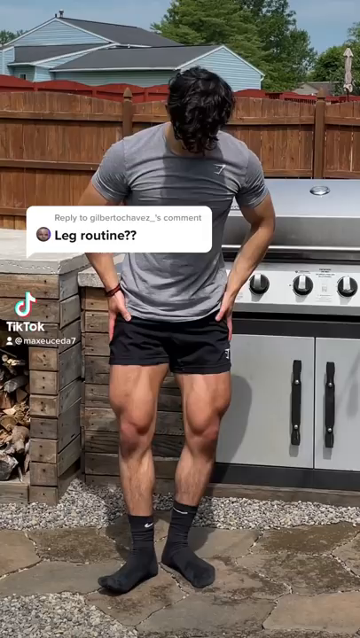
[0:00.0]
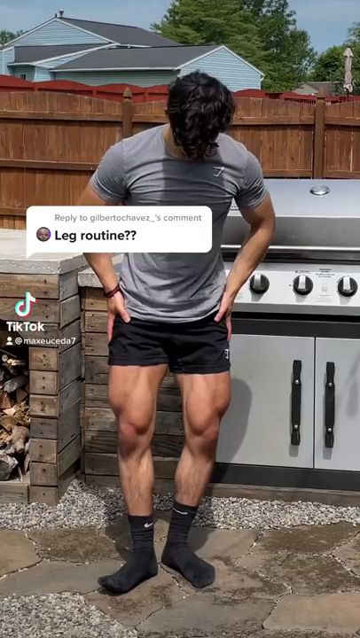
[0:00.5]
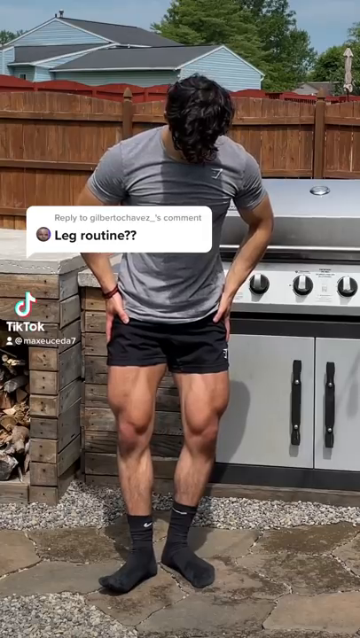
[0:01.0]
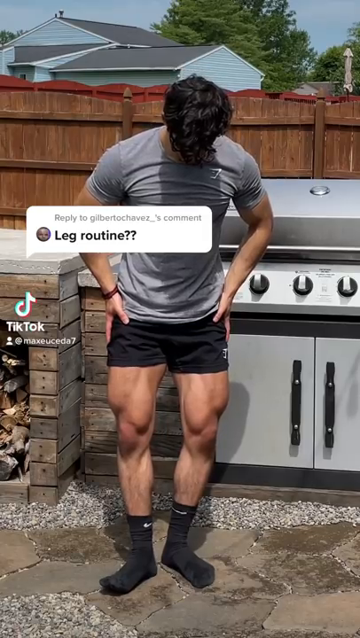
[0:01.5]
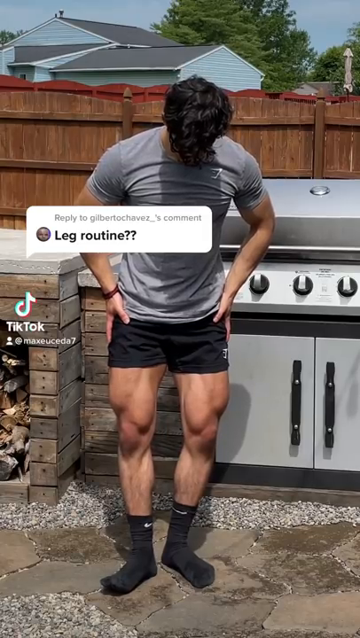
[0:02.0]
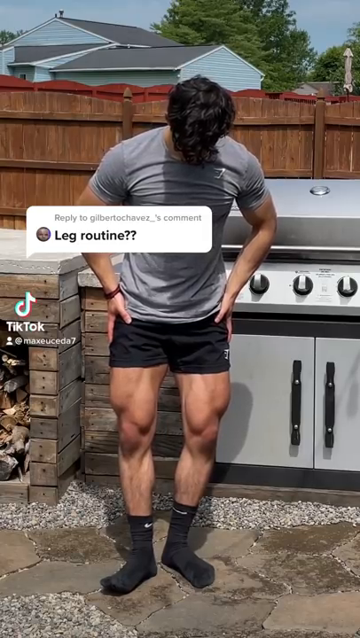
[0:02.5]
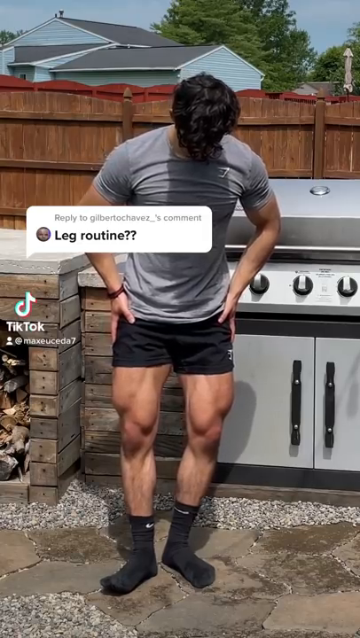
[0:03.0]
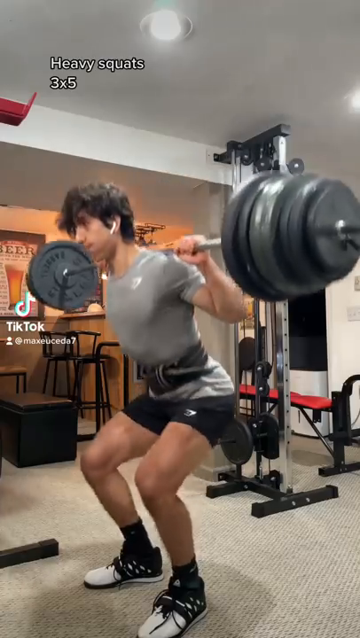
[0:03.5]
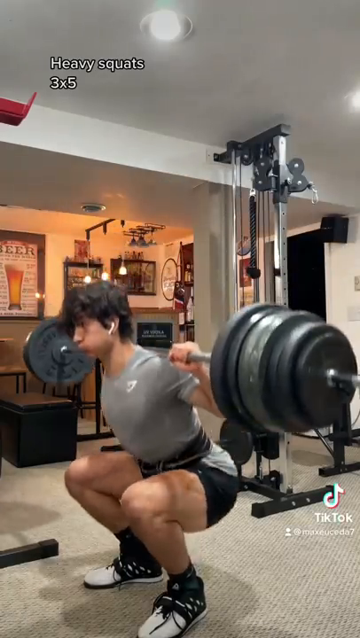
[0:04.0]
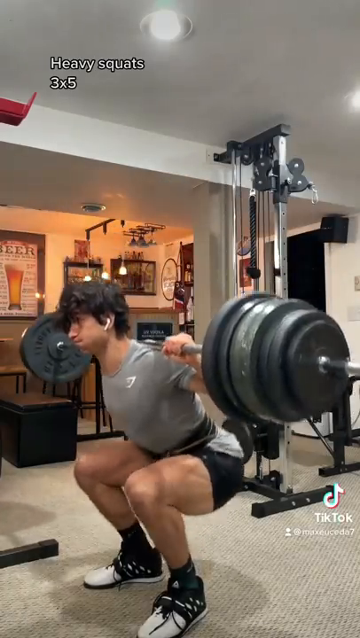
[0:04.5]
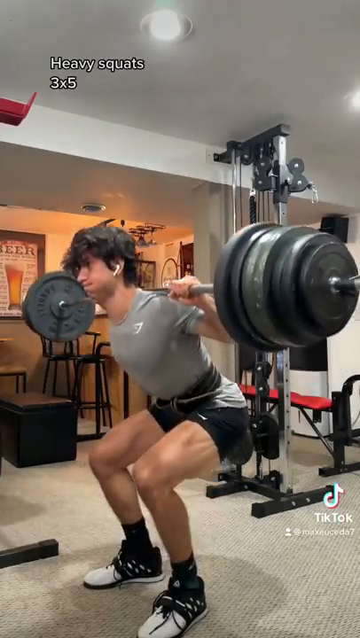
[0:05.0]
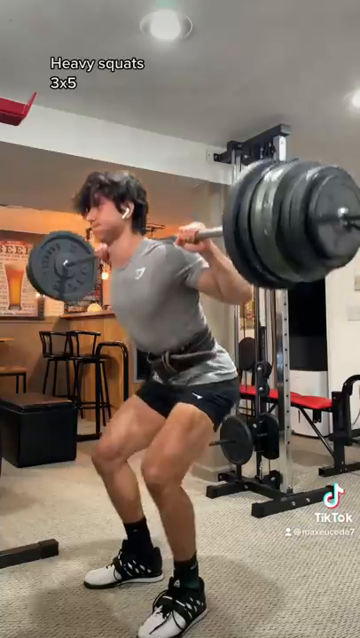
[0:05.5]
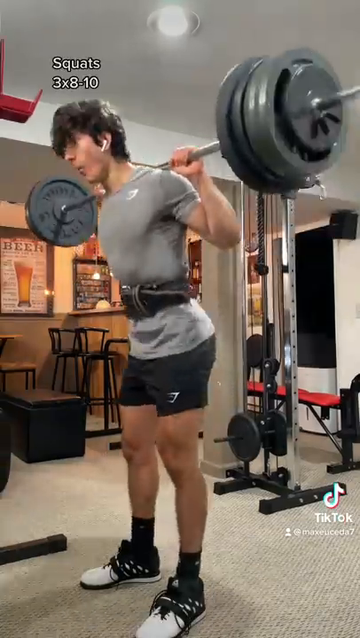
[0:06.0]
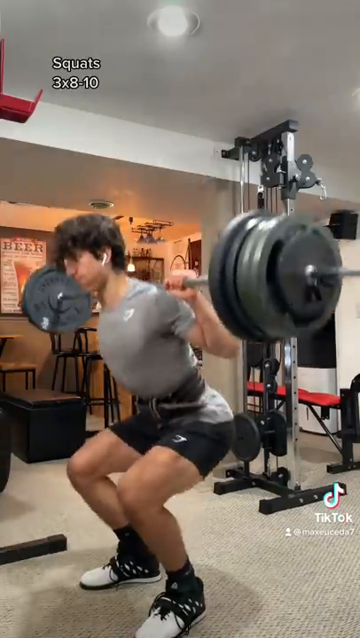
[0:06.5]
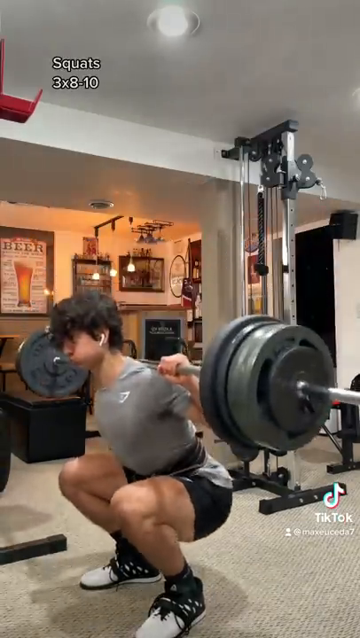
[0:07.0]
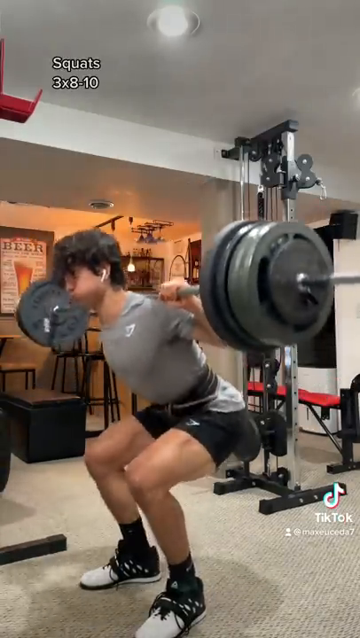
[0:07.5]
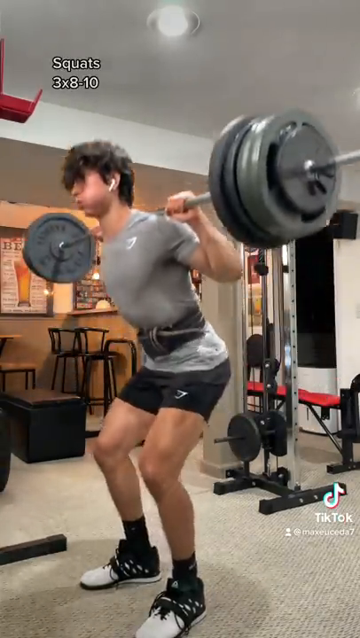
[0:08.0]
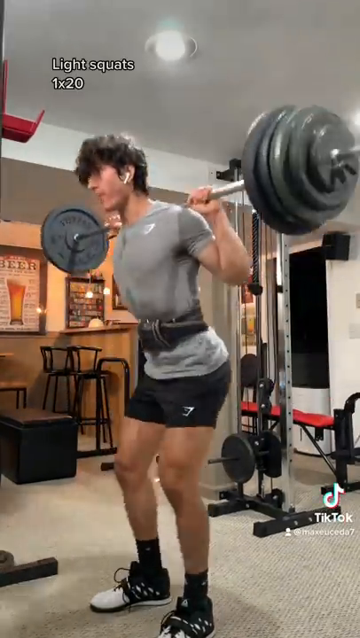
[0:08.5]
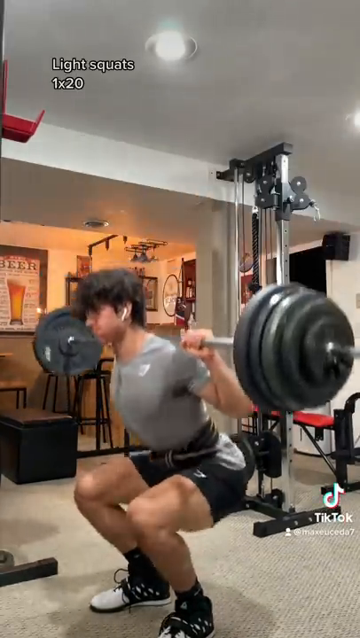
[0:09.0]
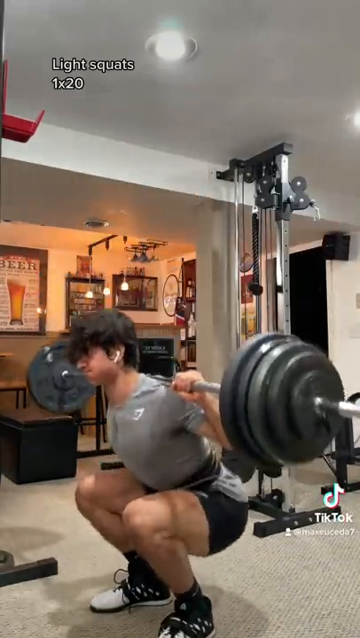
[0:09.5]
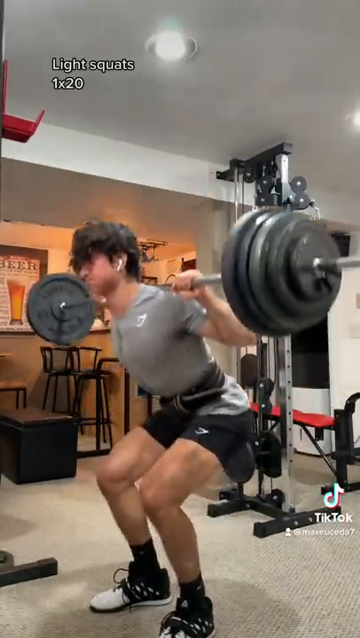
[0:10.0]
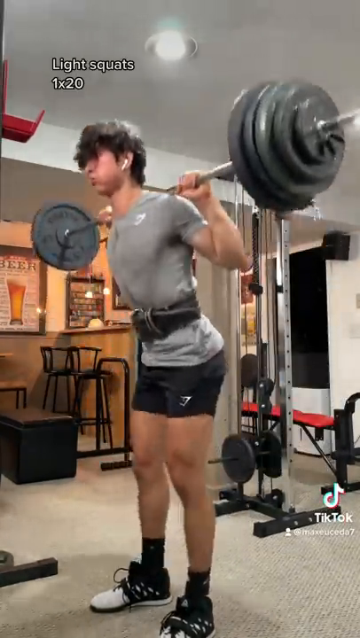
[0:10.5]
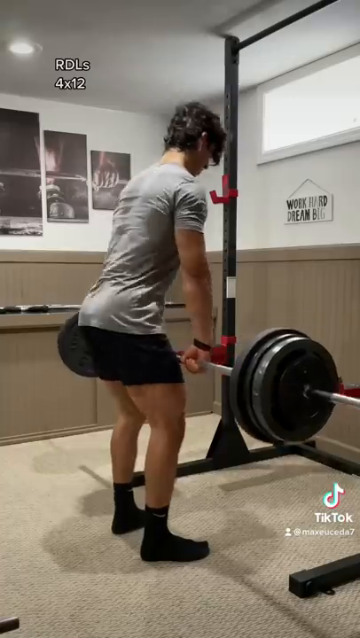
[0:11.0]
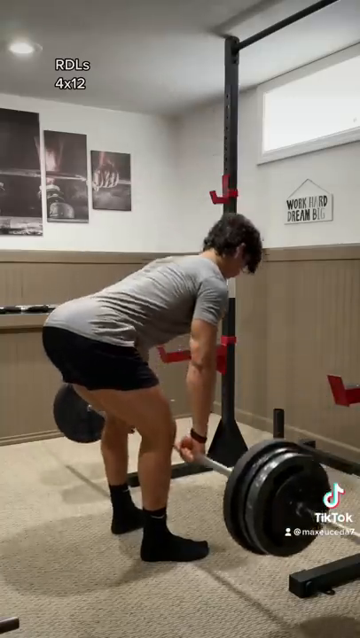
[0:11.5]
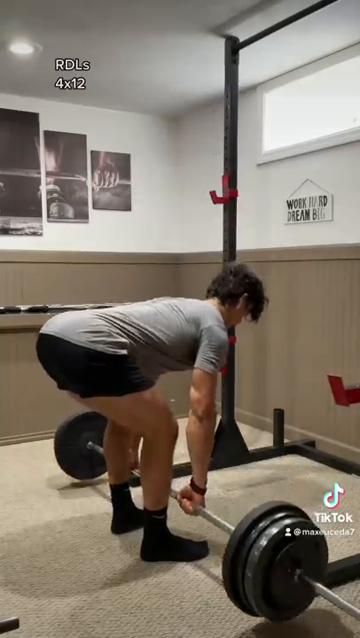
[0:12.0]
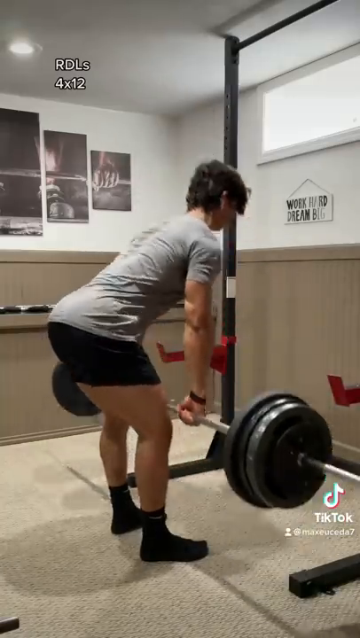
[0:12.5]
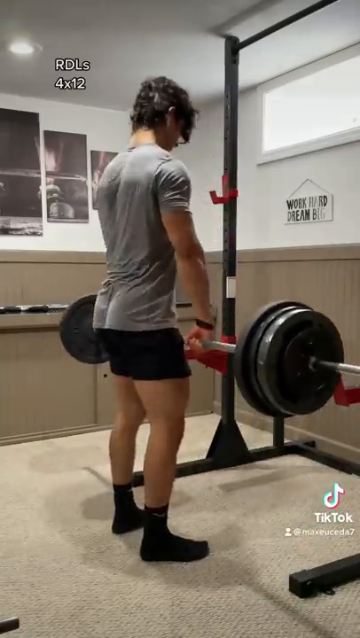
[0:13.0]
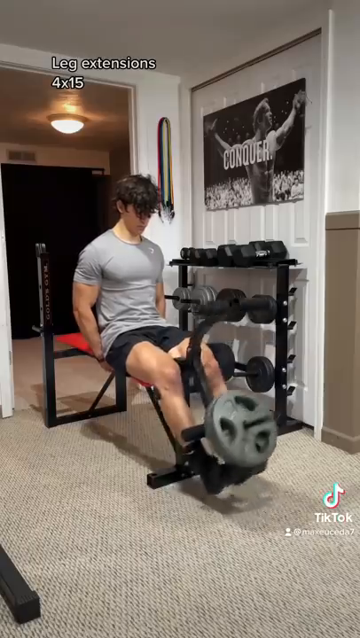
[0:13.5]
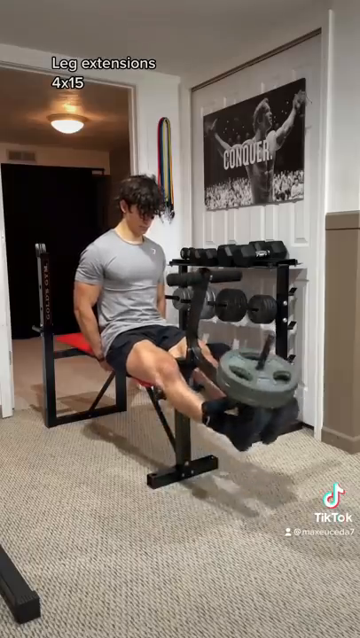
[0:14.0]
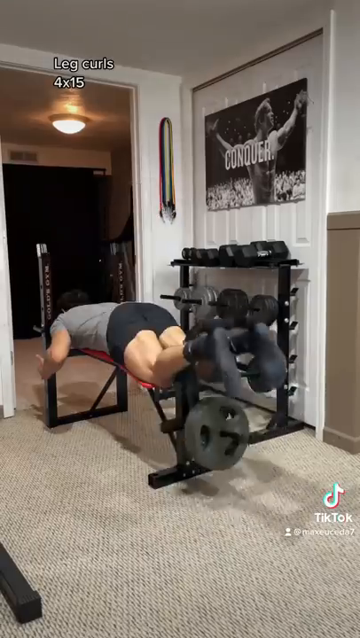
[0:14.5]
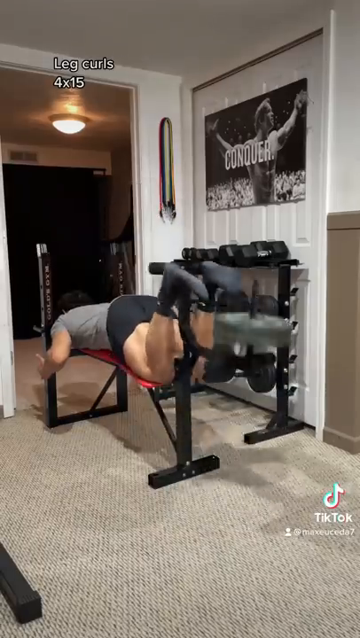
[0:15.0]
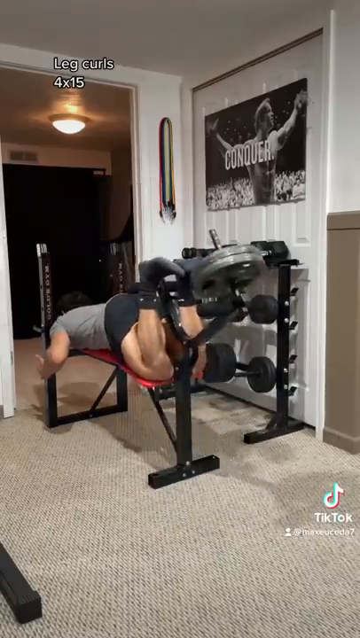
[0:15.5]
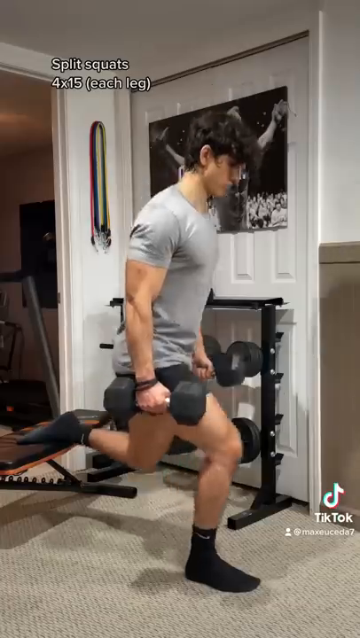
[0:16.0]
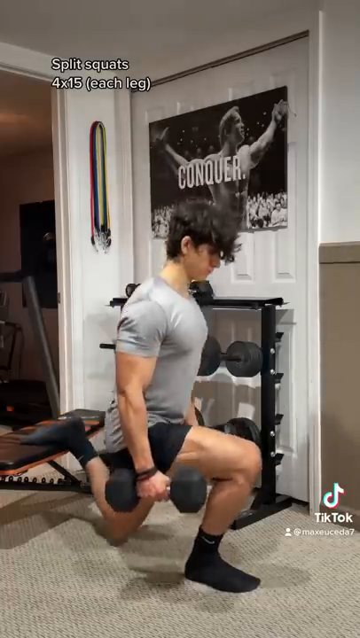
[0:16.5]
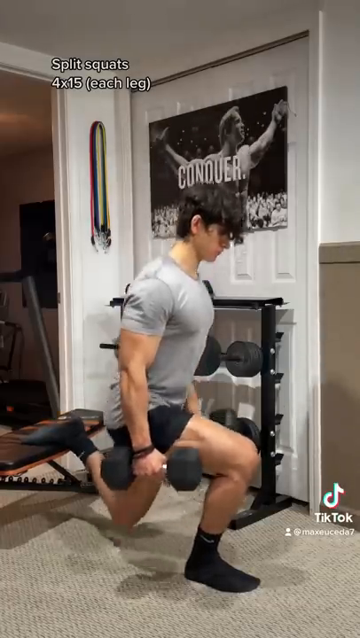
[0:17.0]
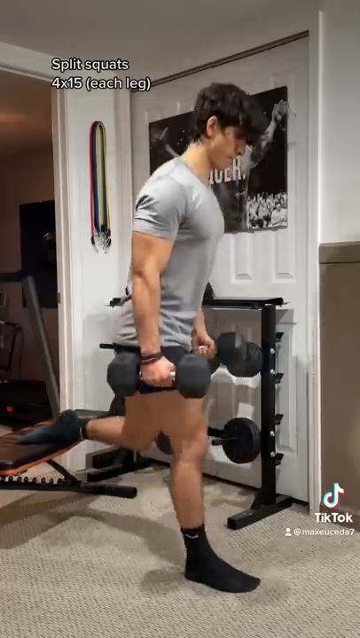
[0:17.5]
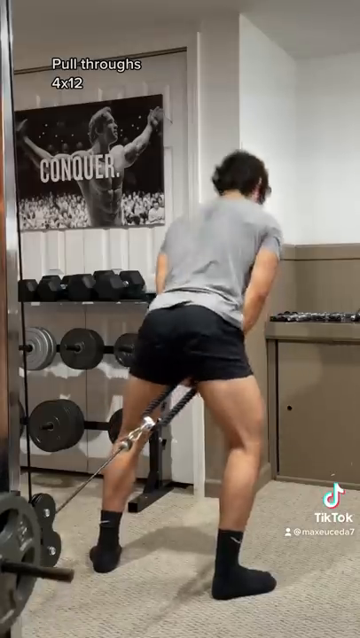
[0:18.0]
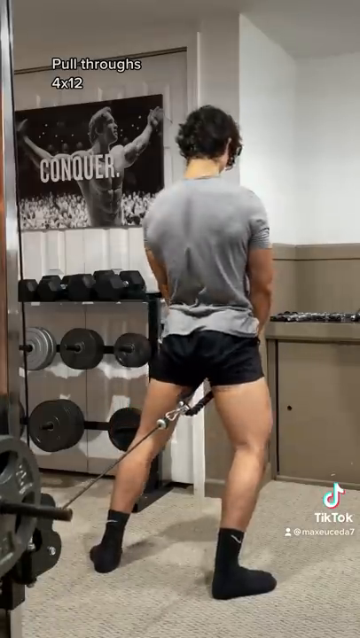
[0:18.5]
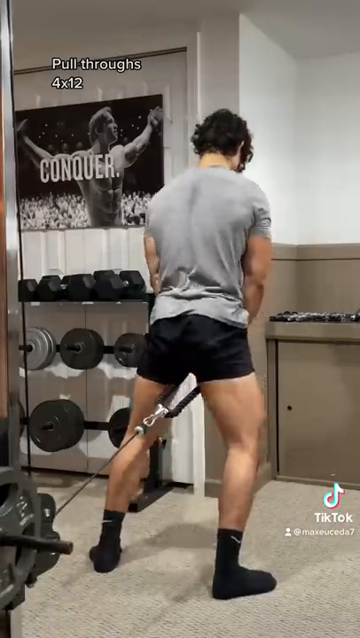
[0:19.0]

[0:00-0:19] The caption at the beginning of the video reads "leg motivation." A man with big, bulgy legs is shown standing outside in front of a barbecue grill. The video then cuts to him doing deadlifts inside a gym. He wears a gray shirt, a black belt, what looks like black biker shorts, black shoes and black socks, and he does more deadlifts and leg lifts. On the wall in the background is a black and white photo that appears to be a motivational message. The video cuts back to him in front of the barbecue pit, staring down at his legs, and then to him doing deadlifts again in black shorts and a gray shirt. There are overhead lights, white walls in the background and a rack of dumbbells; the space looks like an indoor home gym, maybe in a garage. It cuts again to him standing still in front of the barbecue pit, then again to him doing deadlifts, wearing black shoes, socks, black shorts and a gray compression shirt, with a door, a hallway and a gray cabinet in the background. He is shown doing deadlifts once more, and he also does dips with the barbells in his indoor gym. A TikTok logo is visible in the bottom right corner.